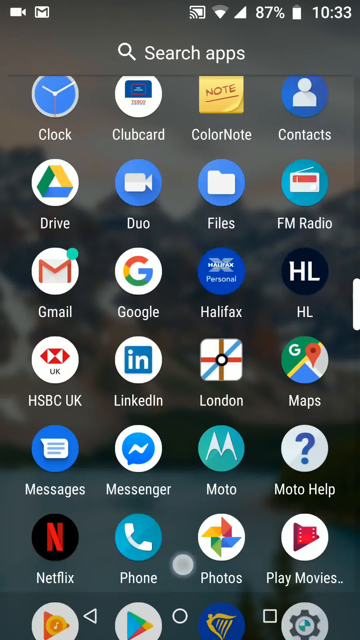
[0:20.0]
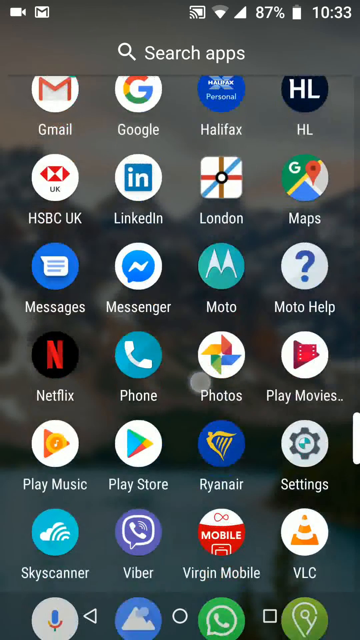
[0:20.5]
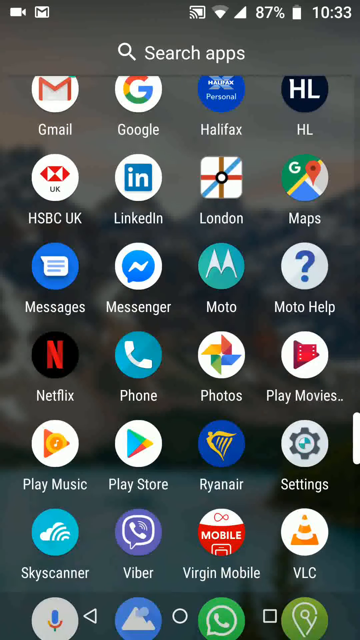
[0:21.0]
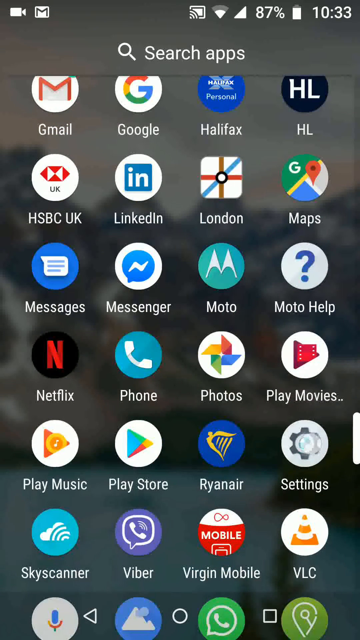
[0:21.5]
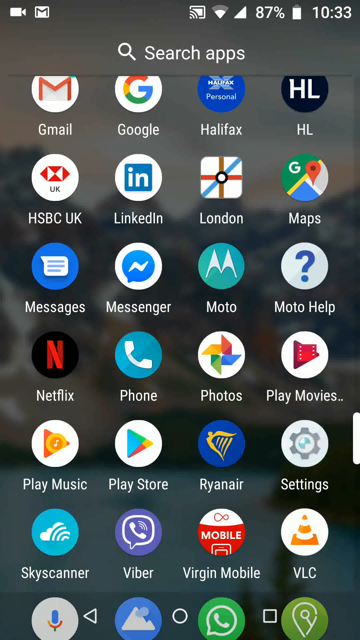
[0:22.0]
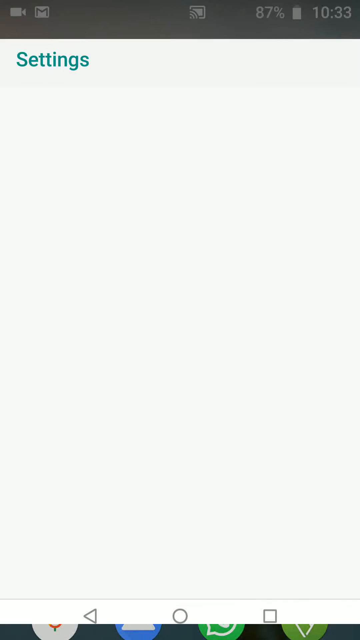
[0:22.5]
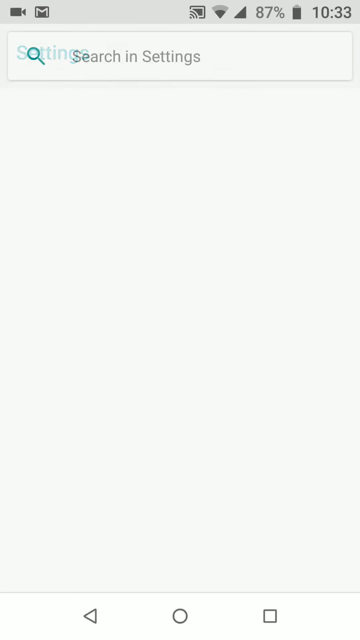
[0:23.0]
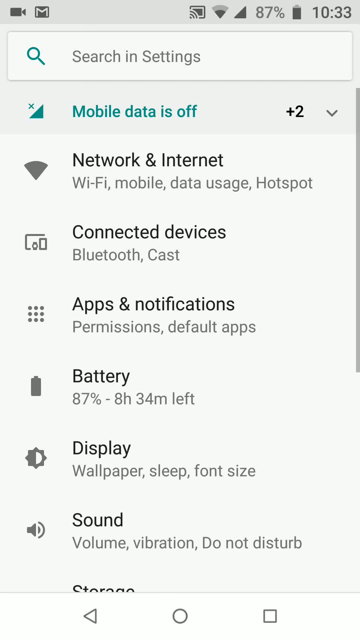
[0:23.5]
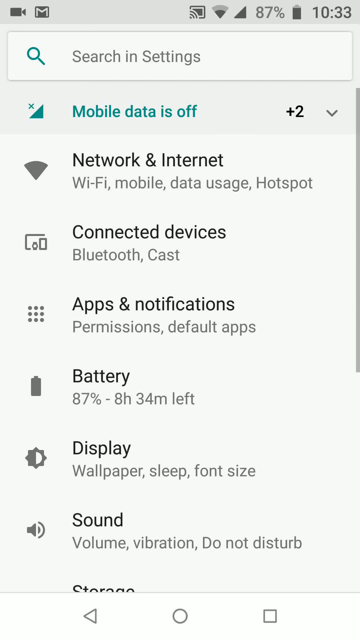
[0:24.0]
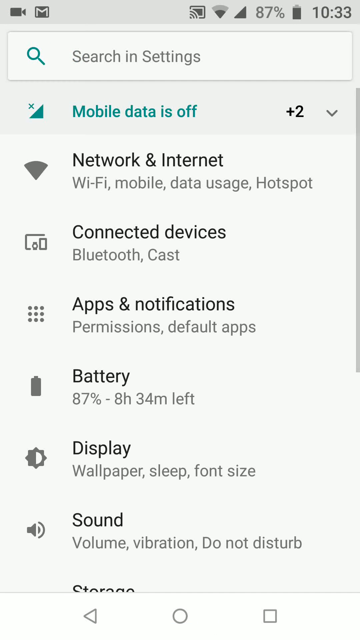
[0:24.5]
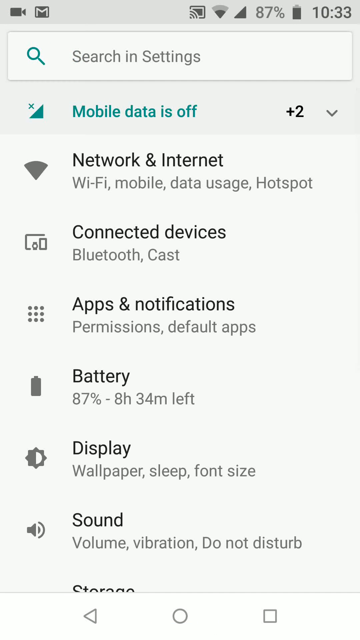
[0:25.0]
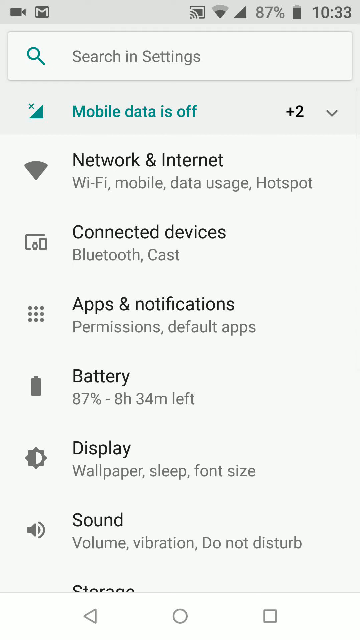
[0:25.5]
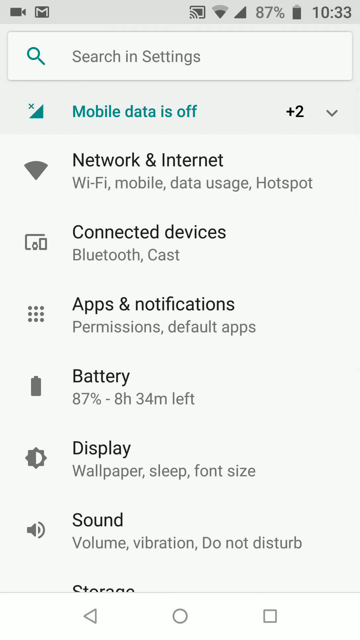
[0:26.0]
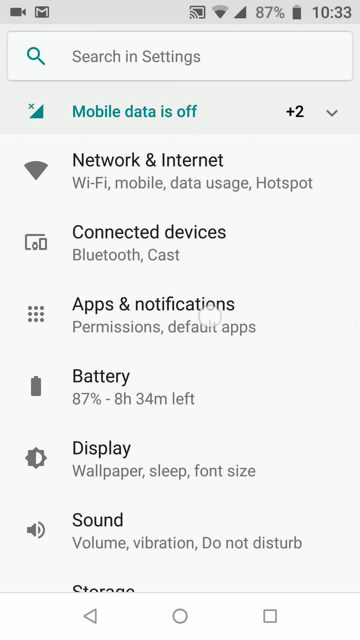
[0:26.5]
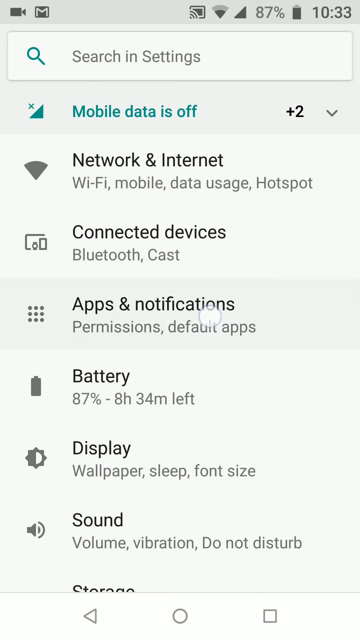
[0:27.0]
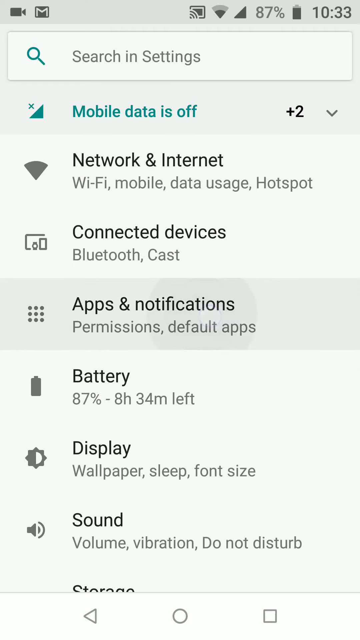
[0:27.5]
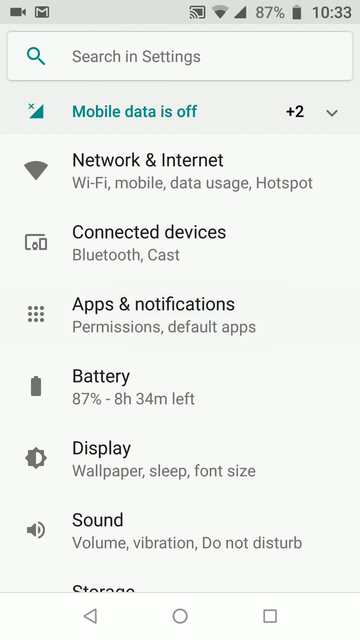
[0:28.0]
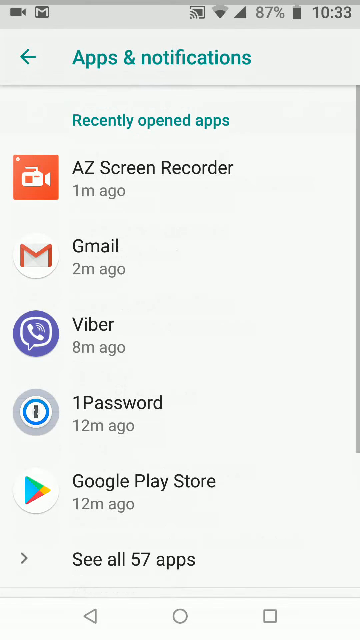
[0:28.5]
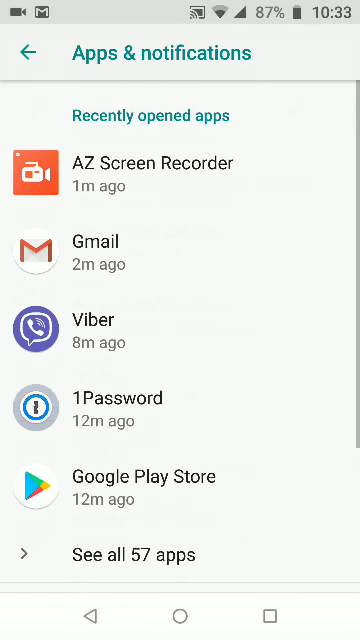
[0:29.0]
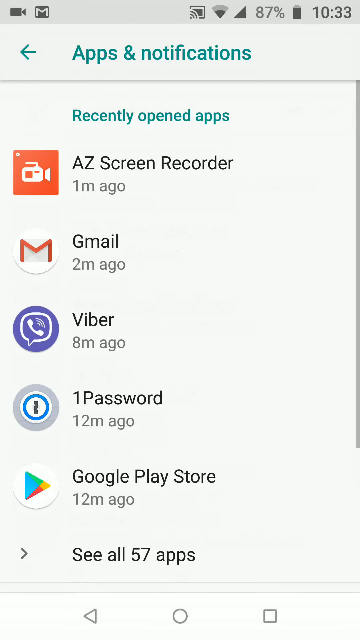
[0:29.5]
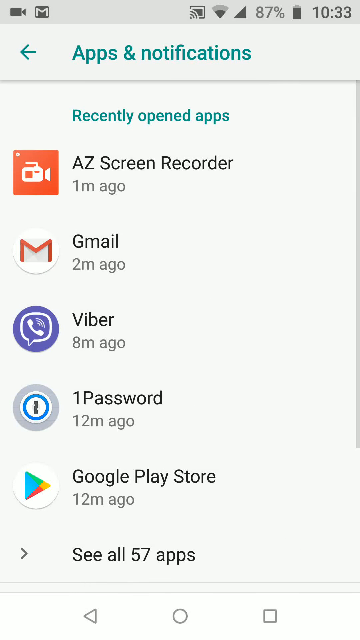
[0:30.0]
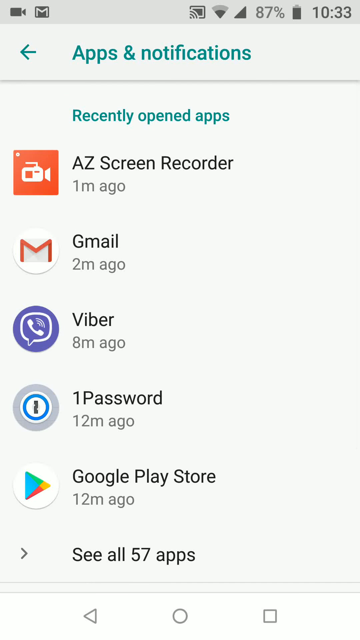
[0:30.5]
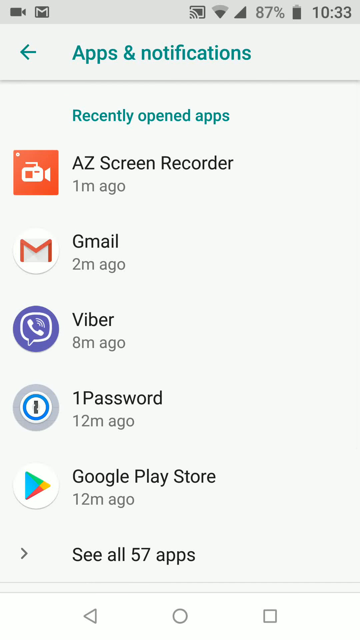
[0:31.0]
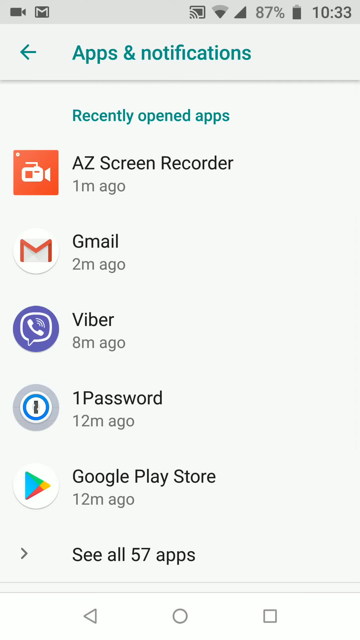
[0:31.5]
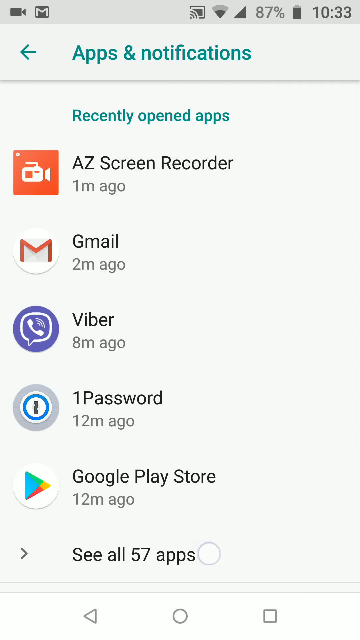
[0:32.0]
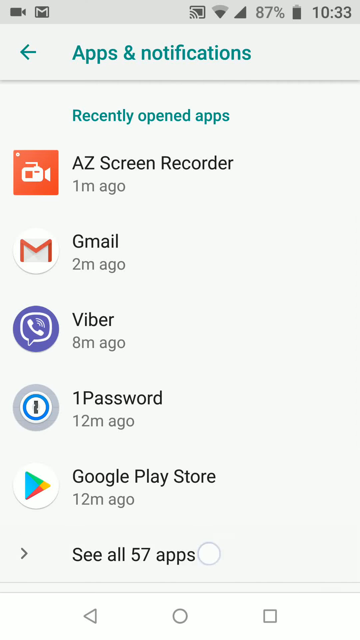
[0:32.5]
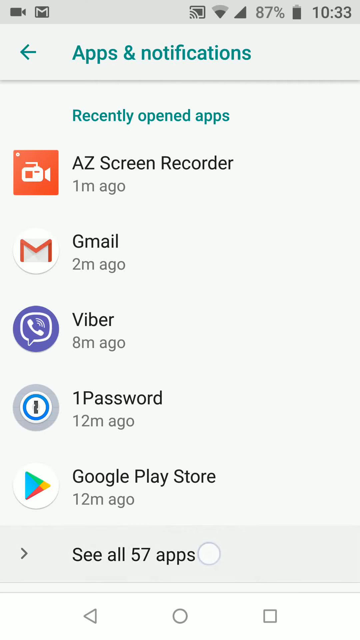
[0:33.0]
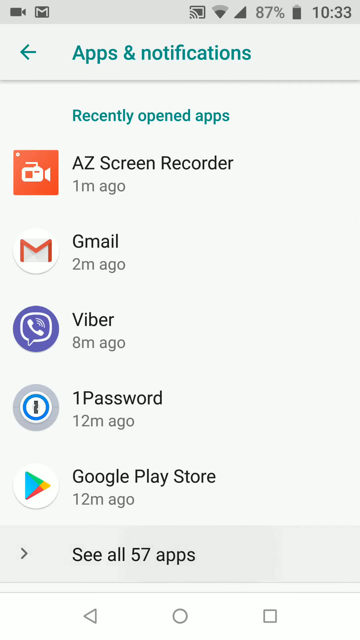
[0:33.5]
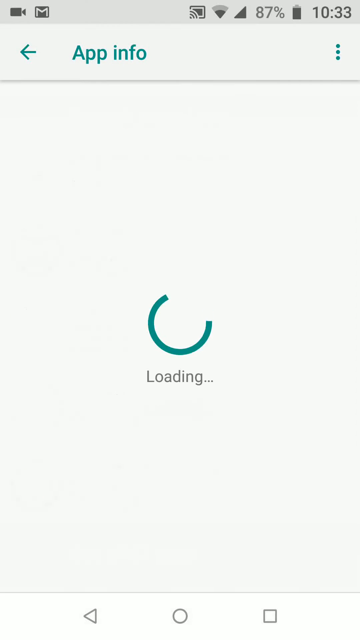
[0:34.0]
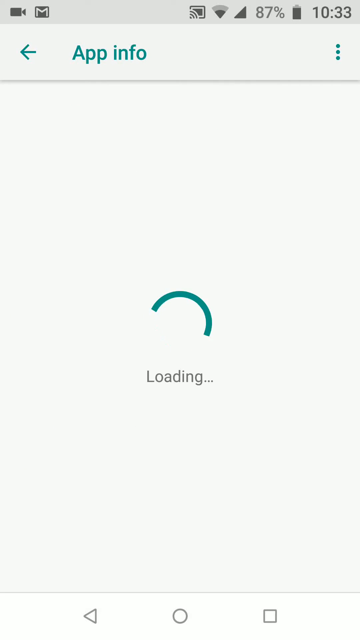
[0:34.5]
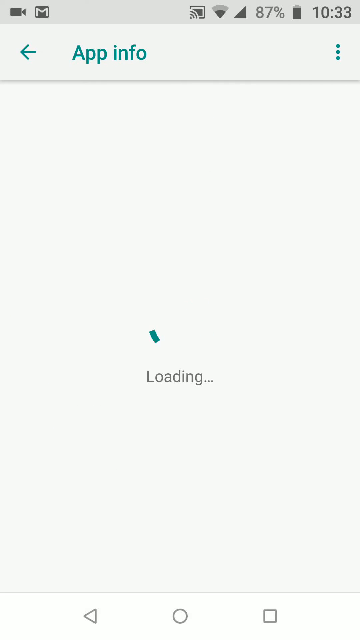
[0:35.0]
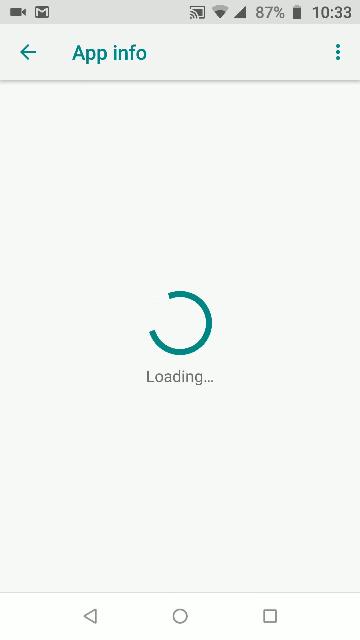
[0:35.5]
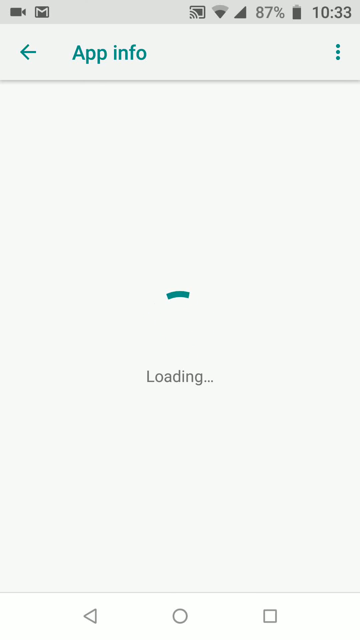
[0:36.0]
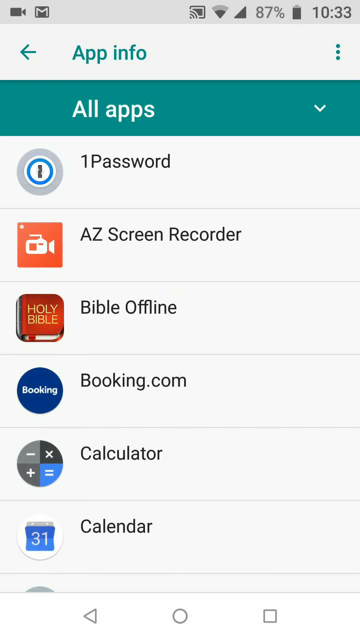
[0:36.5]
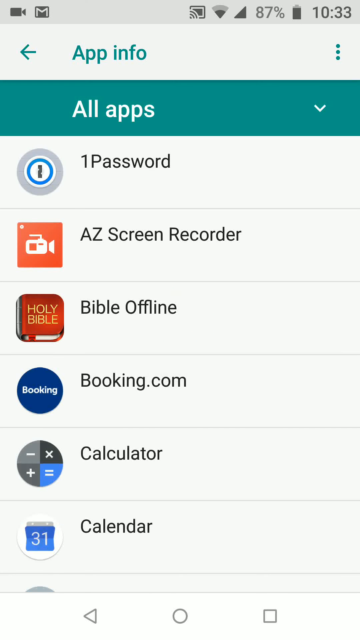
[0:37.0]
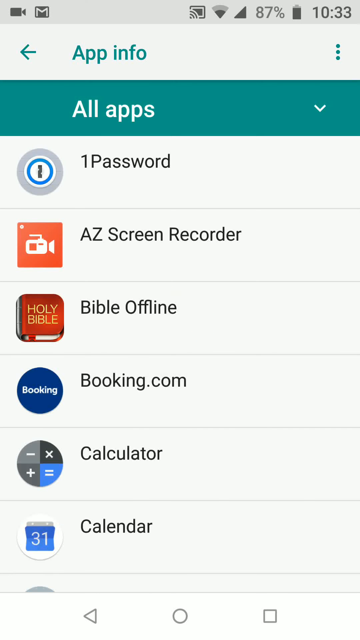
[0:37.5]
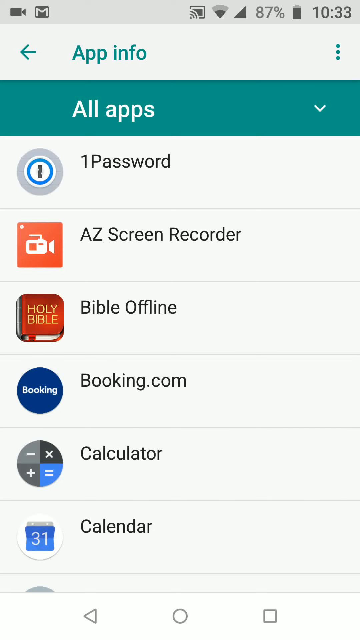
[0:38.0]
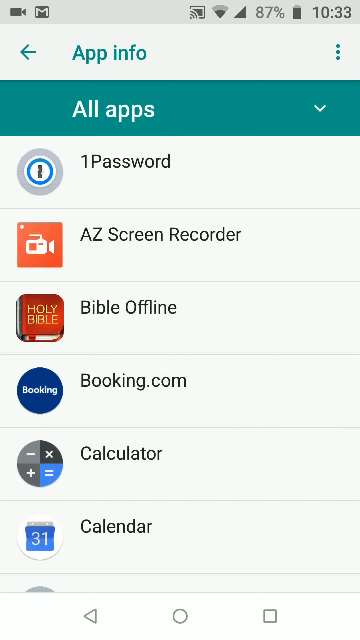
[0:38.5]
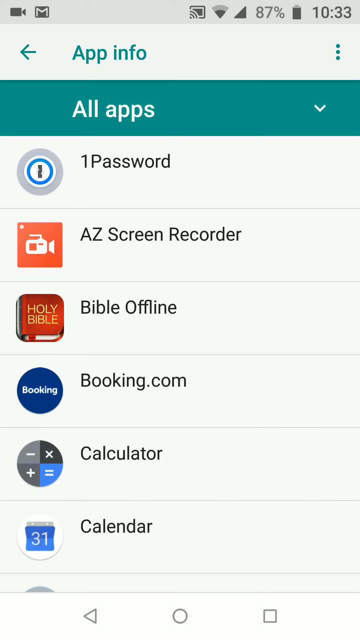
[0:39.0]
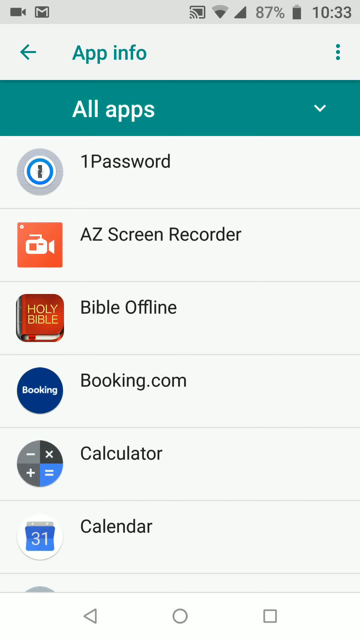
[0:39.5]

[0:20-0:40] The user keeps scrolling down until reaching the settings icon, a gear icon, and opens the settings menu. A search box at the top reads "search in settings". A notification says that mobile data is off; it is in a different color from the rest of the menu text, which is thin black and gray. The settings panels listed are network and internet, connected devices, apps and notifications, battery, display, sound, and storage, which is cut off. The user clicks apps and notifications, which opens a menu showing the recently opened apps, then navigates to all apps, showing a list of all the apps installed on the phone.